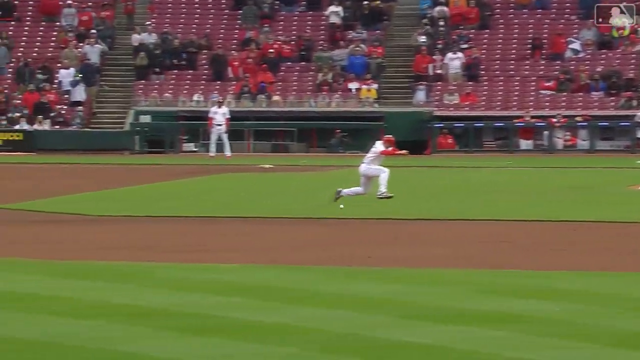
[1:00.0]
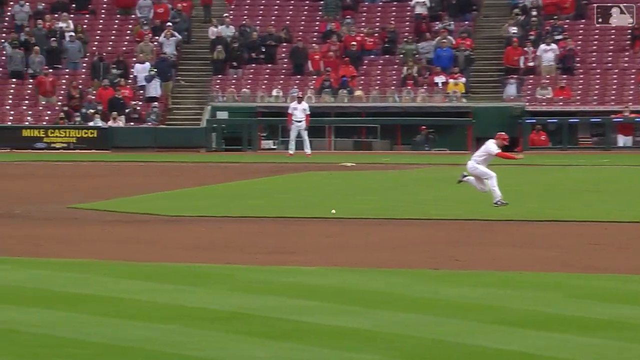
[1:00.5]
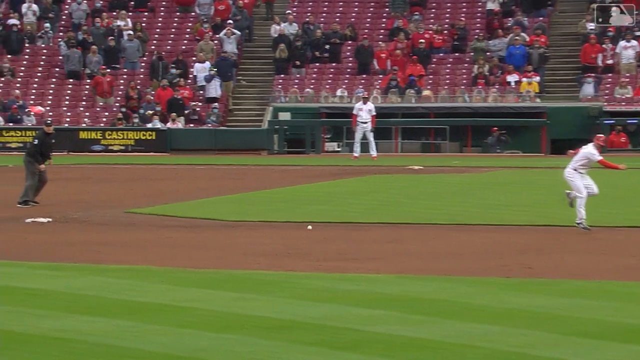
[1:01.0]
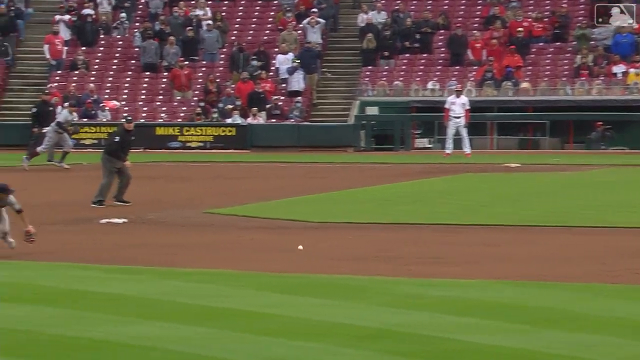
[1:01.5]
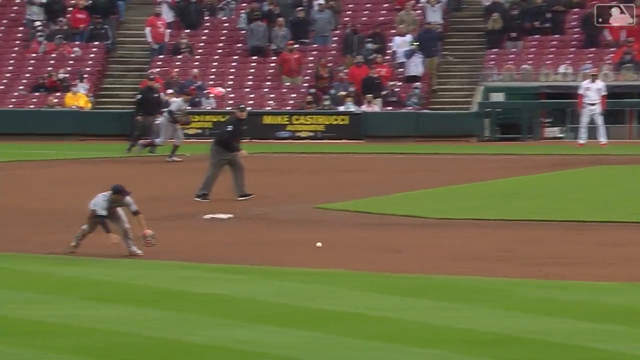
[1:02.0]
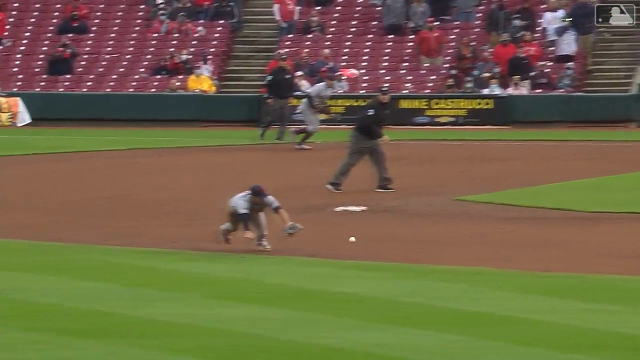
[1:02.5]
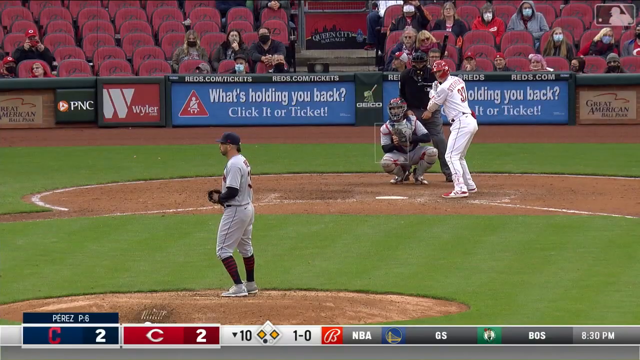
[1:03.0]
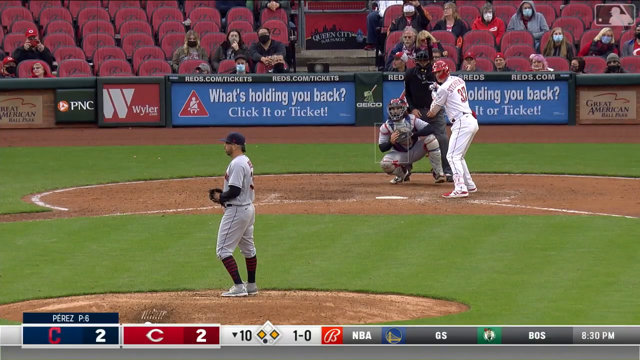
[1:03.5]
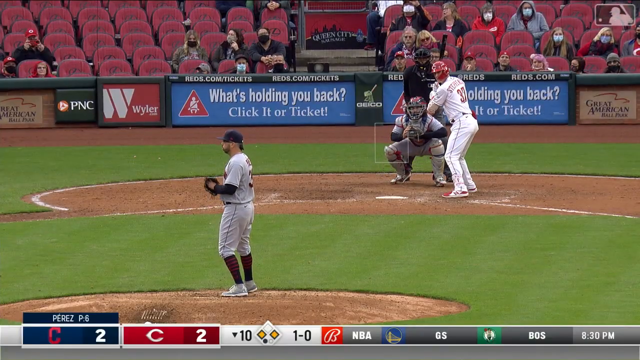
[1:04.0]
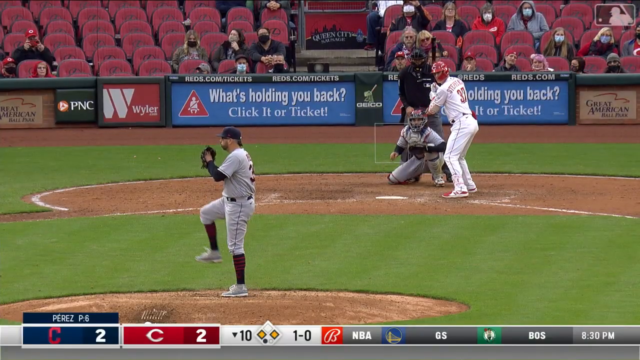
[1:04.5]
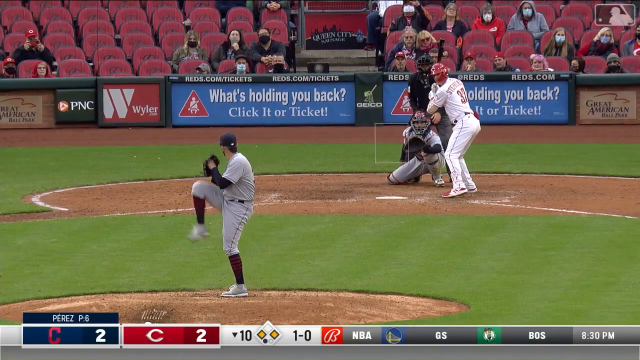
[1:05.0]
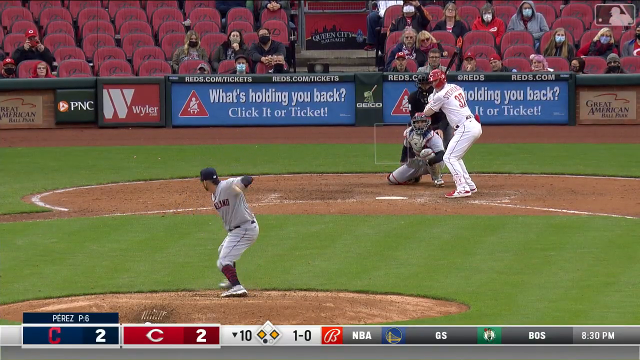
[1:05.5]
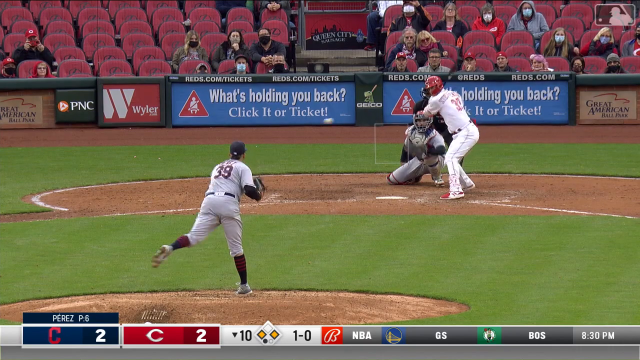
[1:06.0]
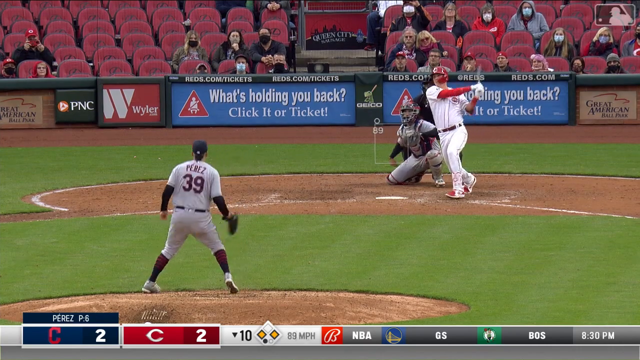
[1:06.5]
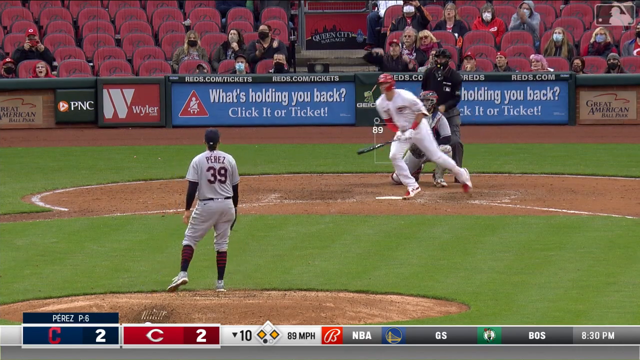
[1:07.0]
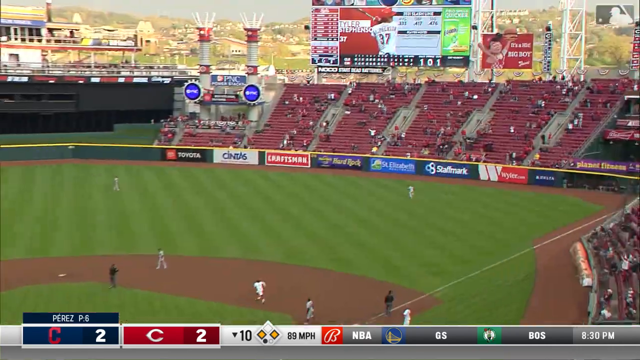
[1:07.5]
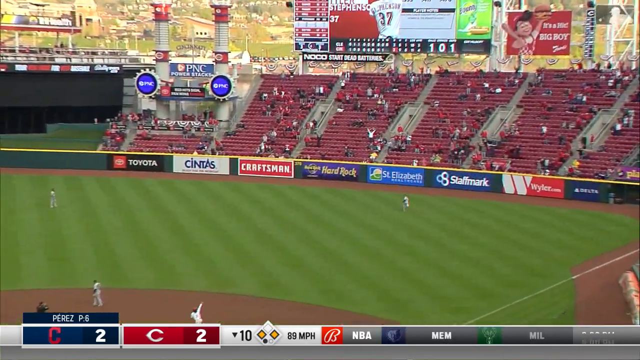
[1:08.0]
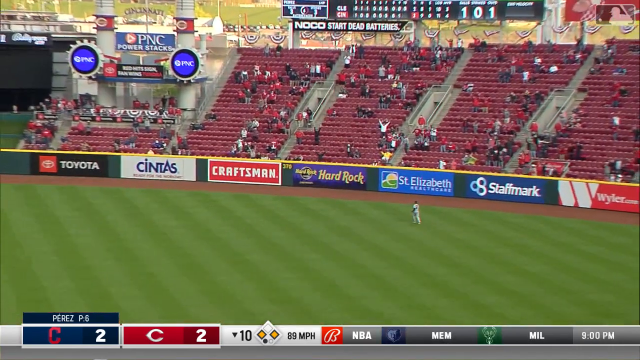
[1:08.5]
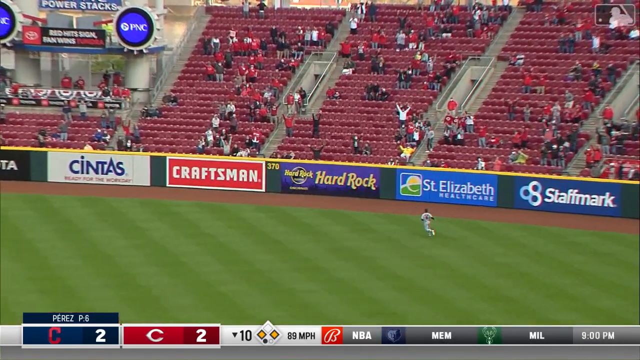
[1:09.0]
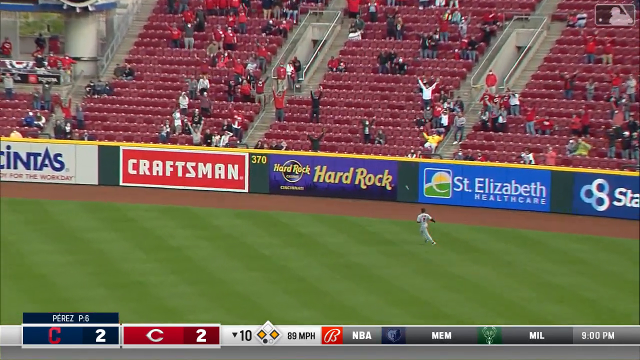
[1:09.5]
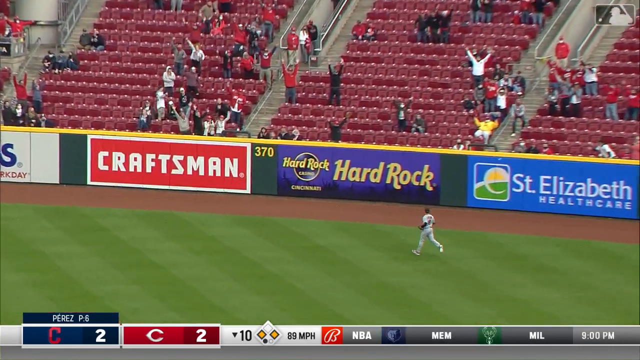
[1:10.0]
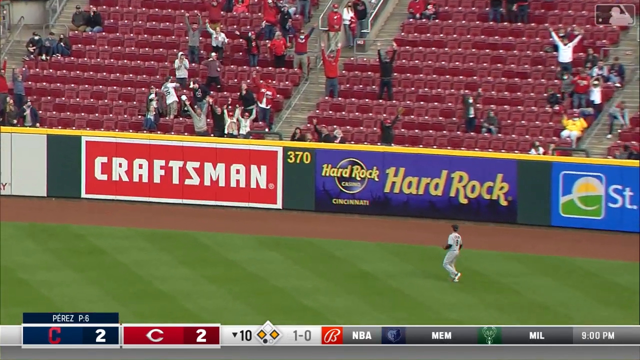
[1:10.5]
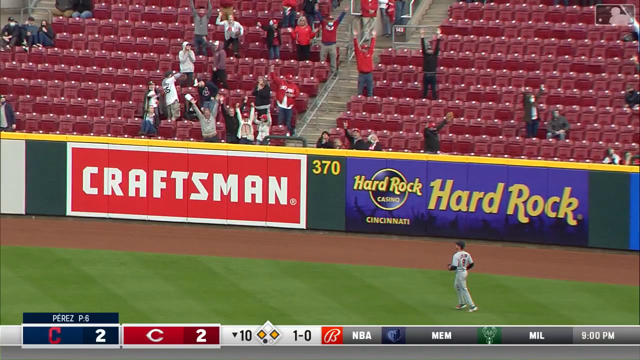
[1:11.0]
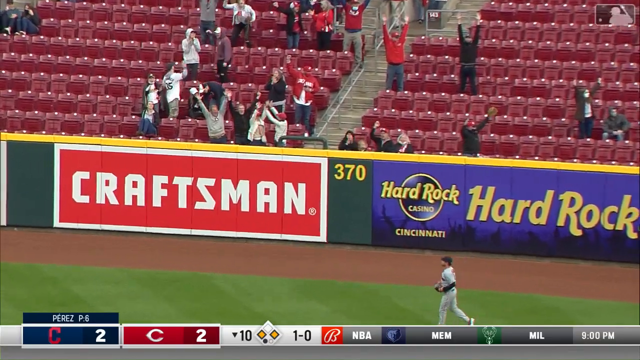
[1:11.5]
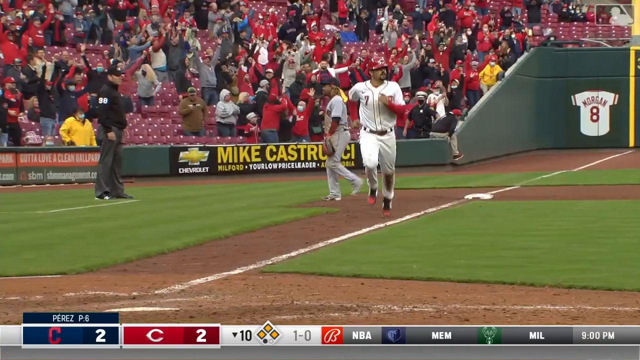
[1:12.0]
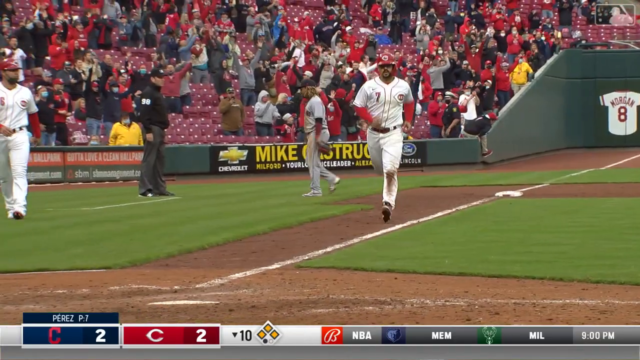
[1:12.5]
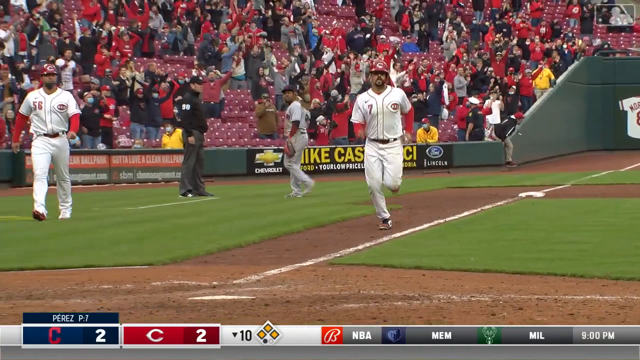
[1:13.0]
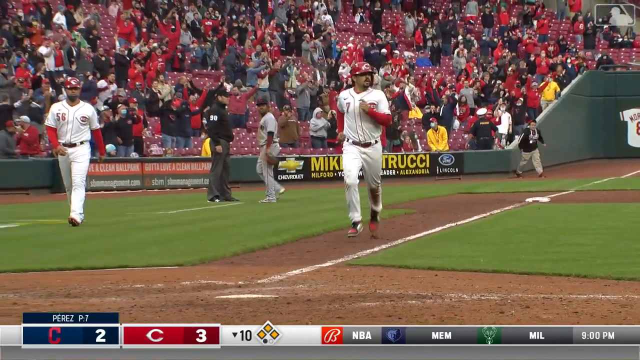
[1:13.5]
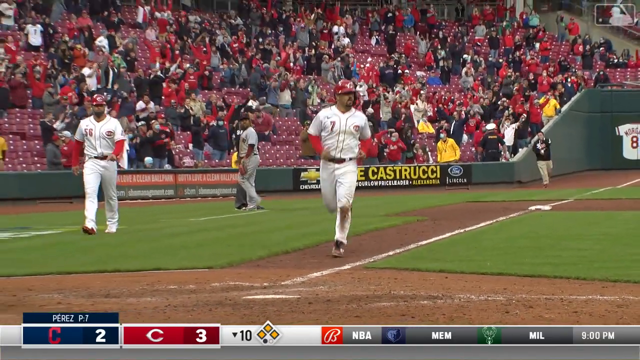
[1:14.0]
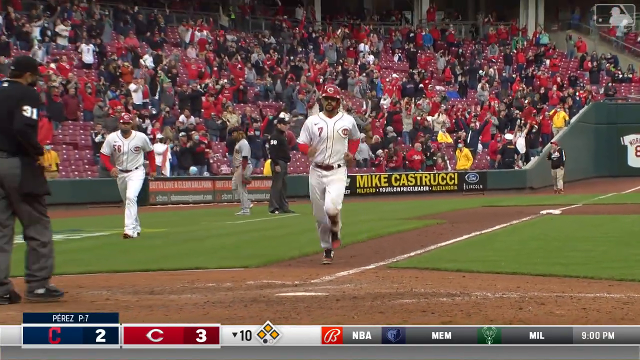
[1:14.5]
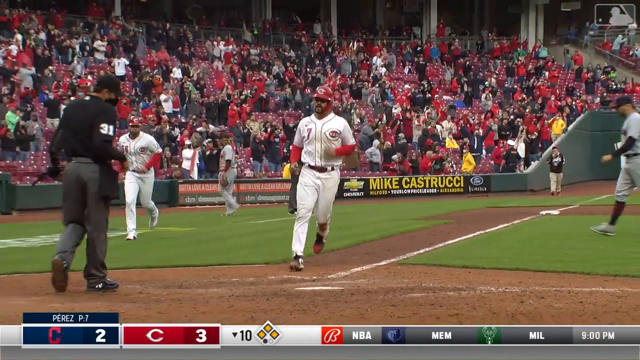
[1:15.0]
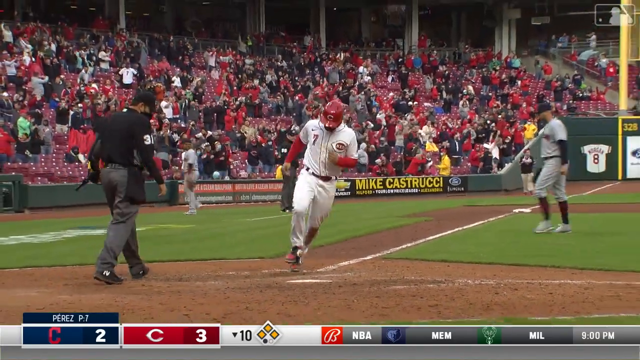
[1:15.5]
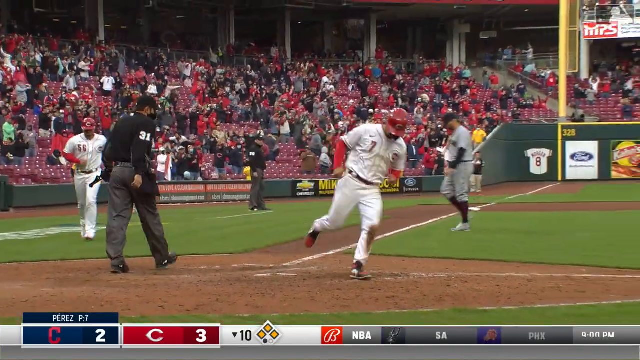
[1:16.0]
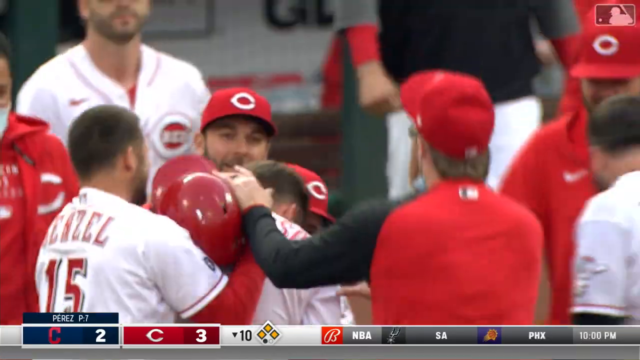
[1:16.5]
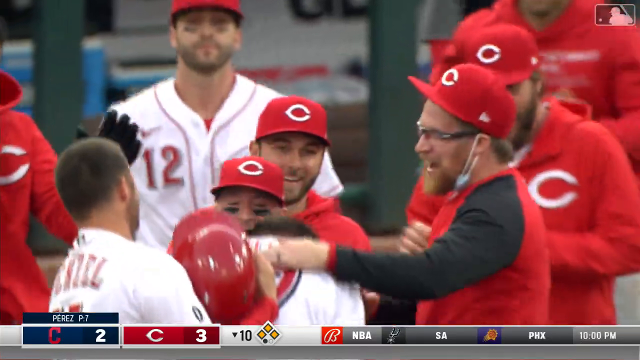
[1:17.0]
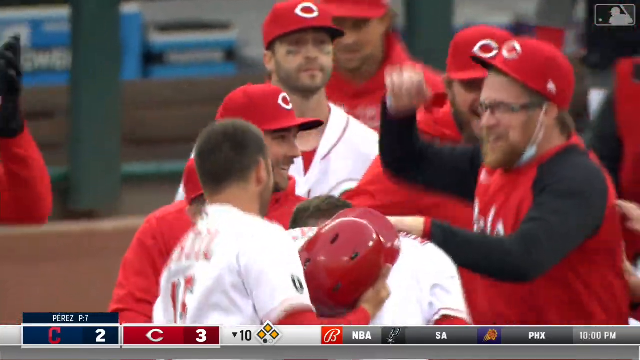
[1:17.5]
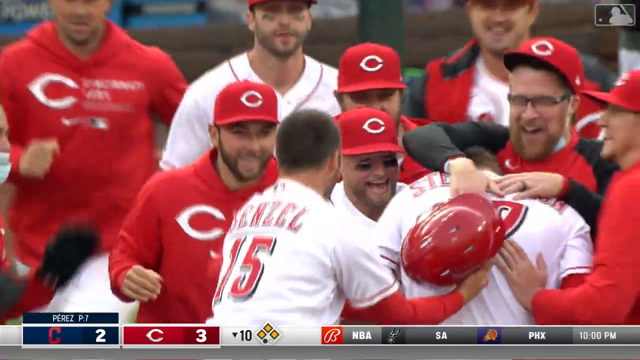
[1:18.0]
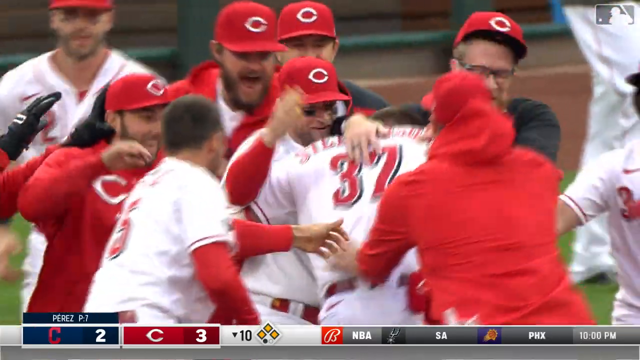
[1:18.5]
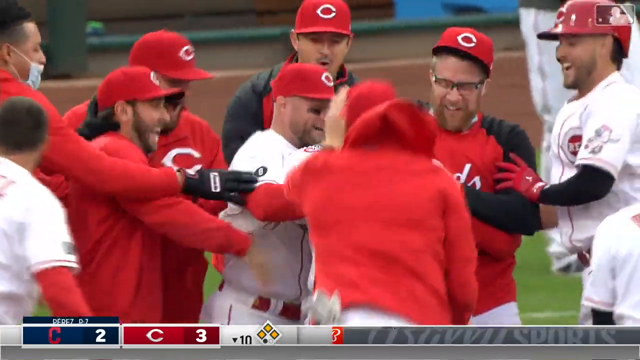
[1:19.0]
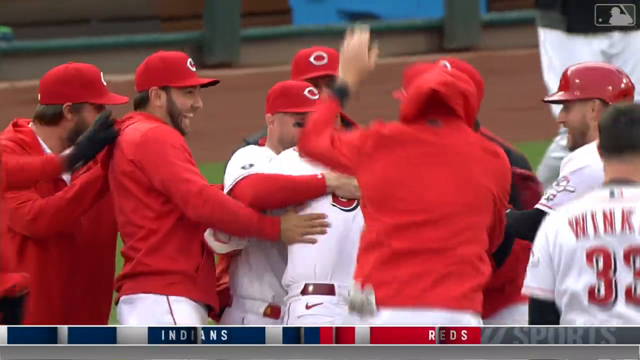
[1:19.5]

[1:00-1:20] More of the bleachers where the audience sits come into view. The spectators seem to be spaced apart, possibly due to COVID regulations, and some seem to be wearing ponchos or rain jackets, possibly indicating the weather is not great. The score at the bottom of the screen reads 1-0, along with the time, 8.30pm. An even wider view of the field shows how big it is, with the spaced-apart audience. The field is outdoors, with buildings and a landscape behind it. It looks a little cloudy or rainy, but the sun is still shining a bit. At the back of the bleachers there is a very large screen showing video of the event and the current scores and players.